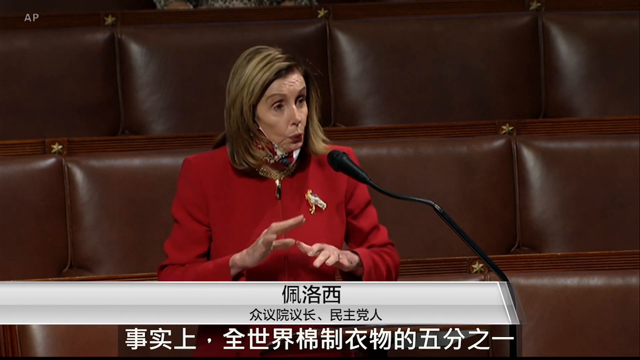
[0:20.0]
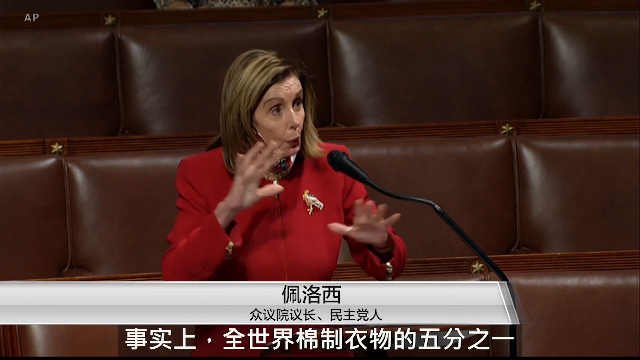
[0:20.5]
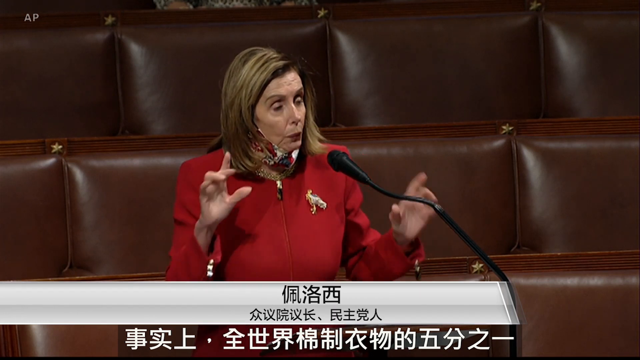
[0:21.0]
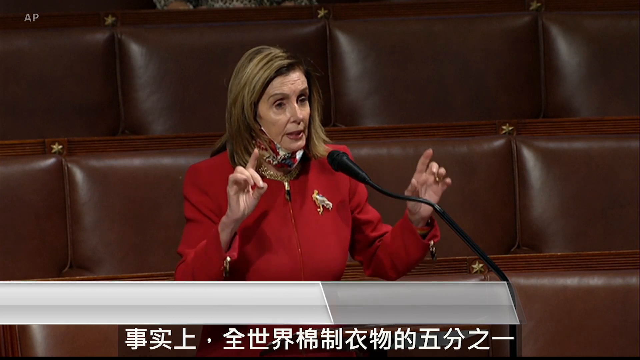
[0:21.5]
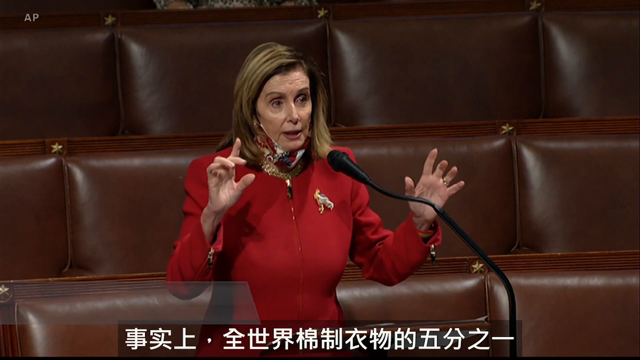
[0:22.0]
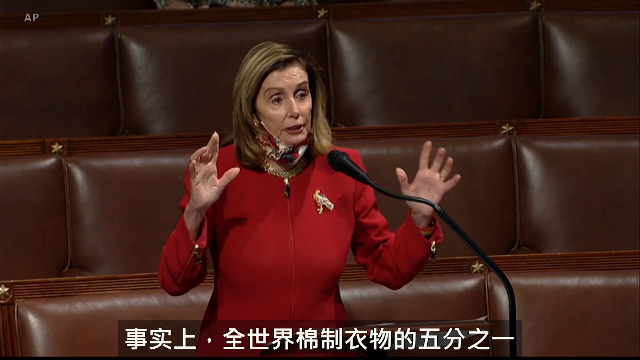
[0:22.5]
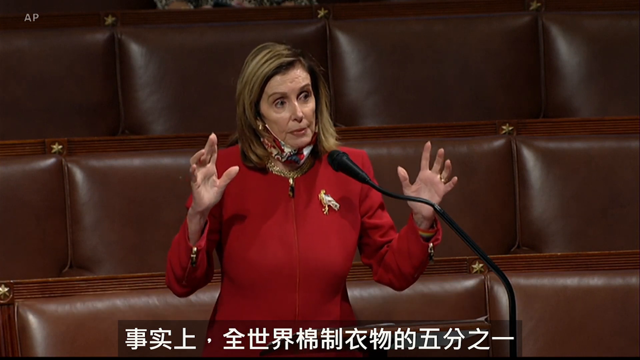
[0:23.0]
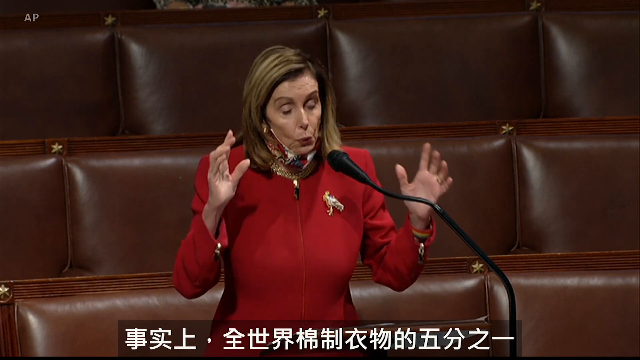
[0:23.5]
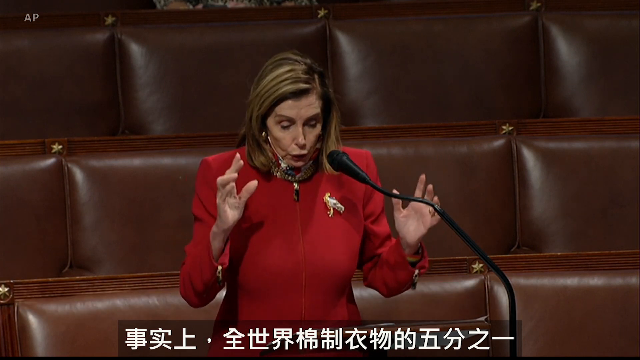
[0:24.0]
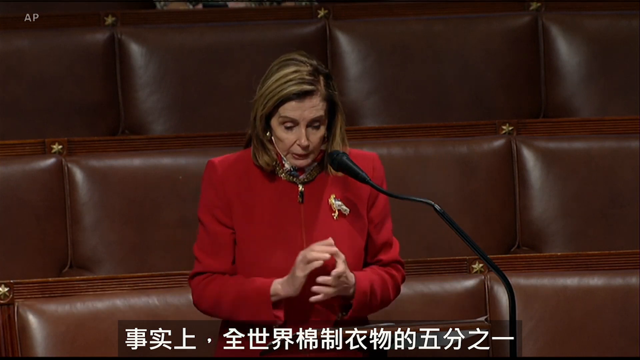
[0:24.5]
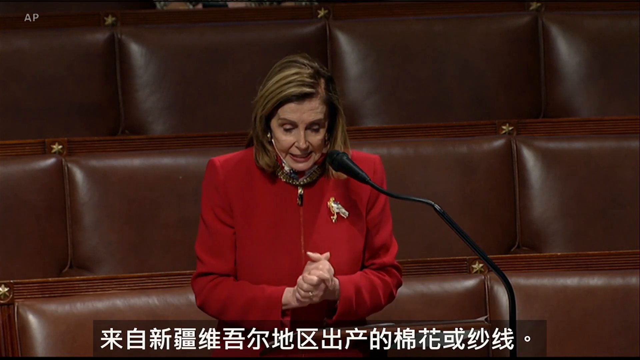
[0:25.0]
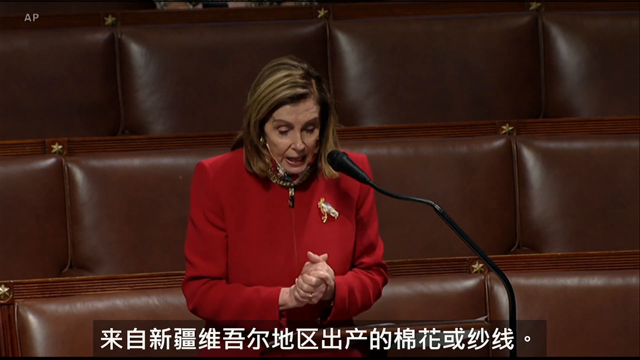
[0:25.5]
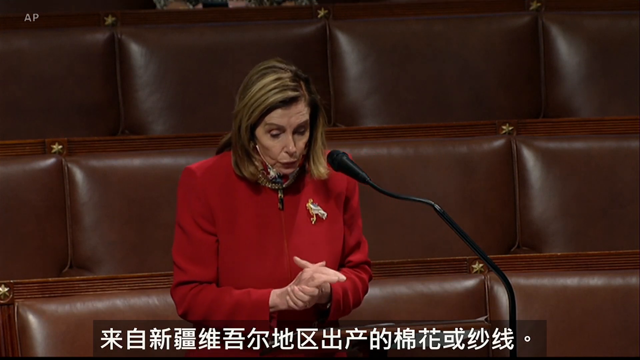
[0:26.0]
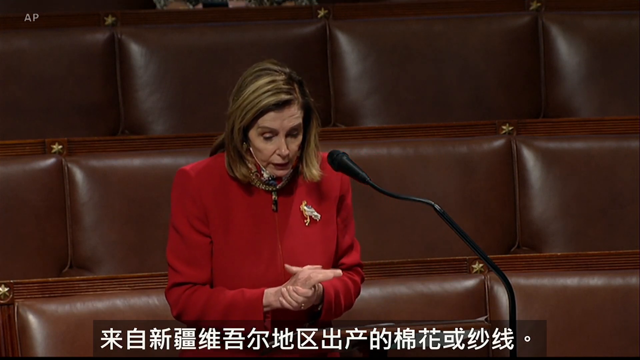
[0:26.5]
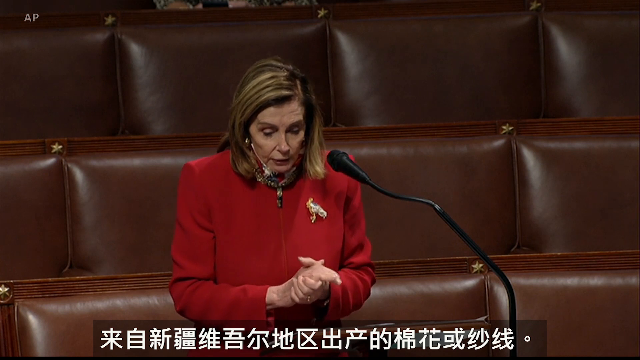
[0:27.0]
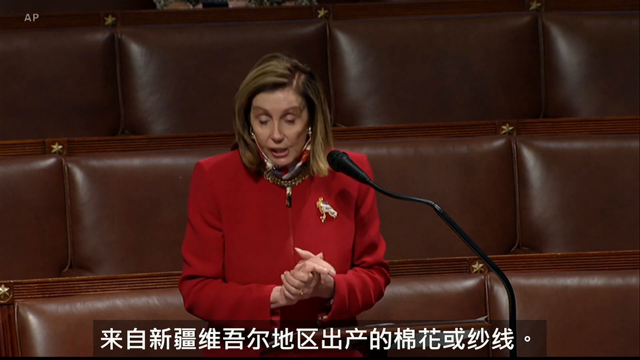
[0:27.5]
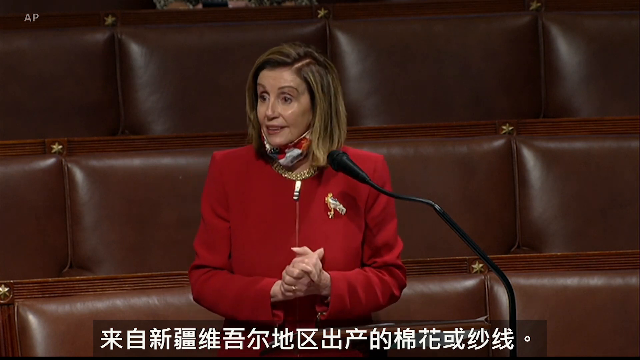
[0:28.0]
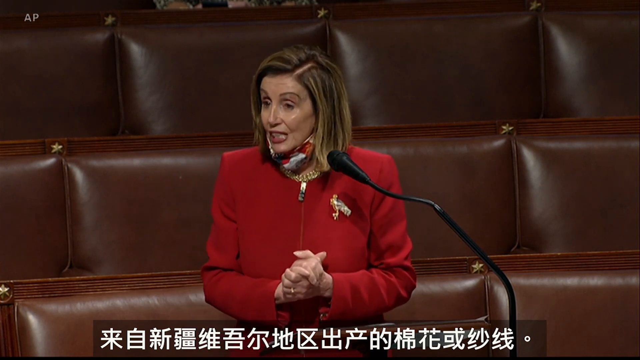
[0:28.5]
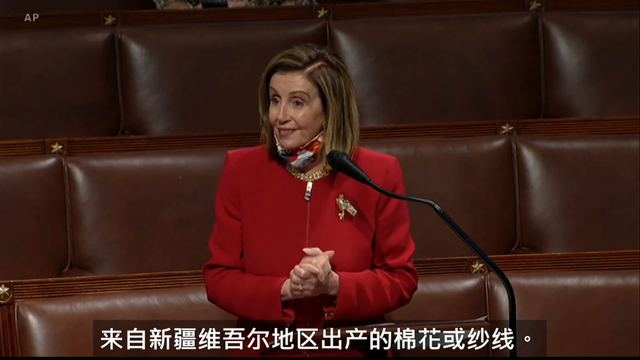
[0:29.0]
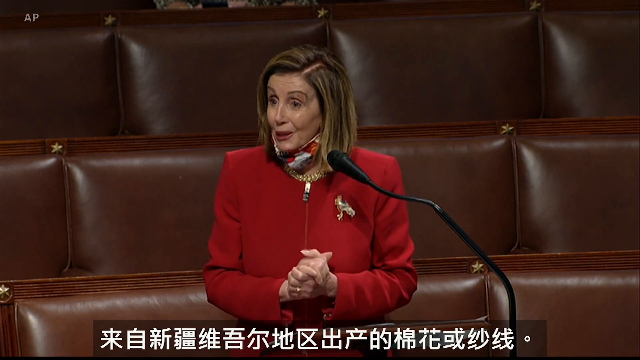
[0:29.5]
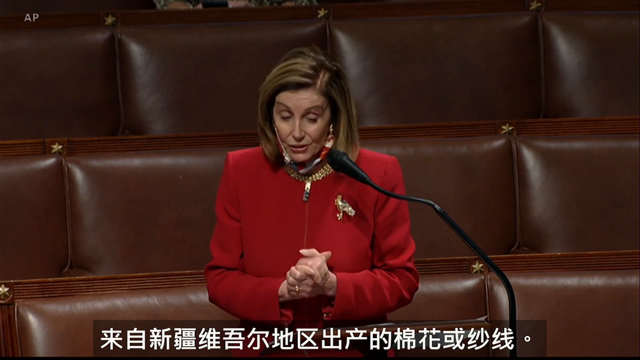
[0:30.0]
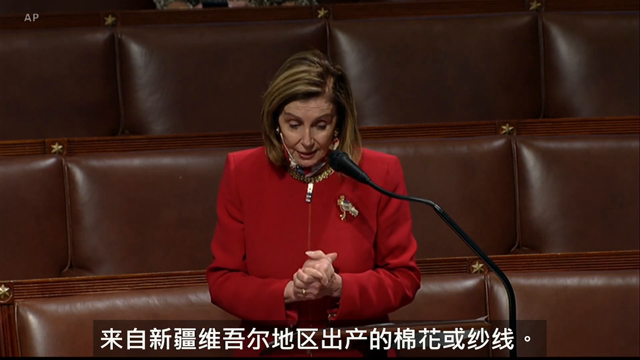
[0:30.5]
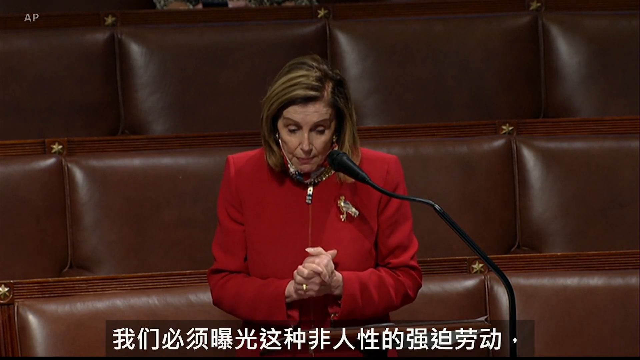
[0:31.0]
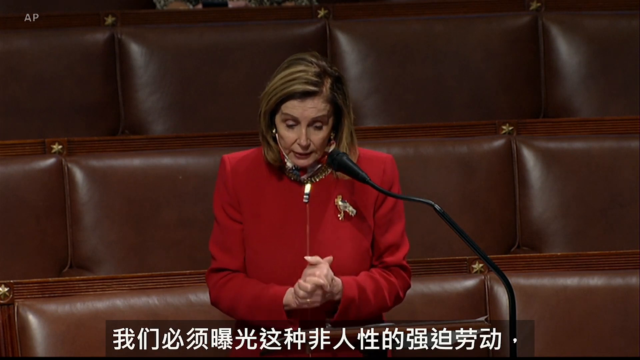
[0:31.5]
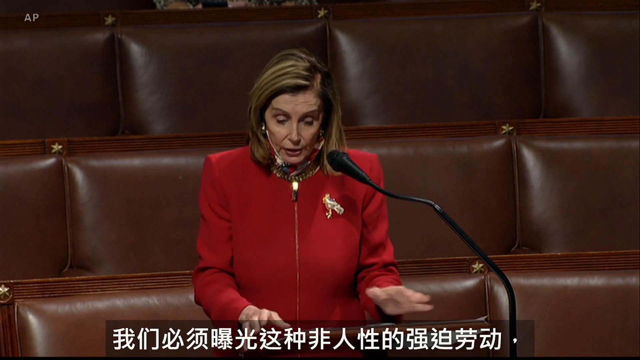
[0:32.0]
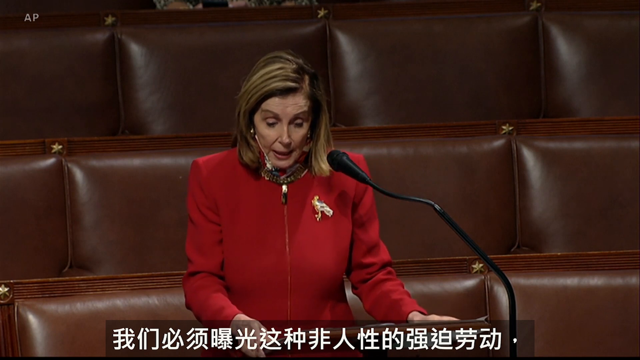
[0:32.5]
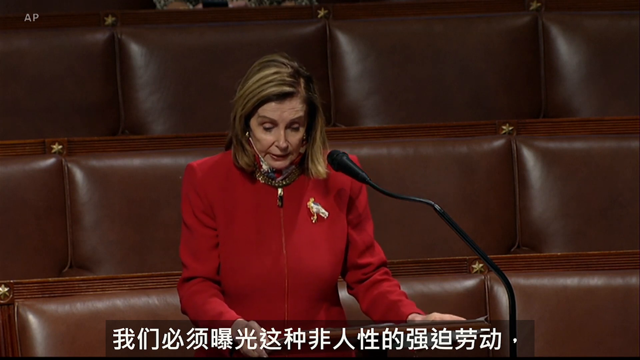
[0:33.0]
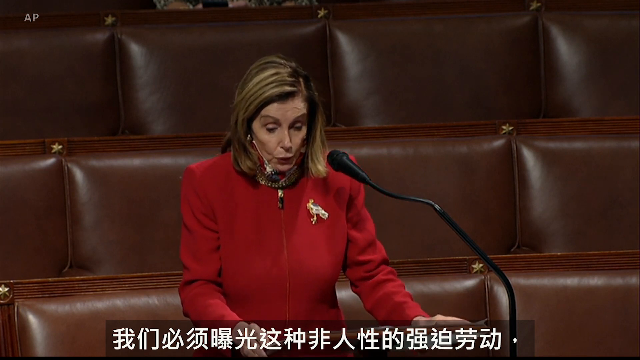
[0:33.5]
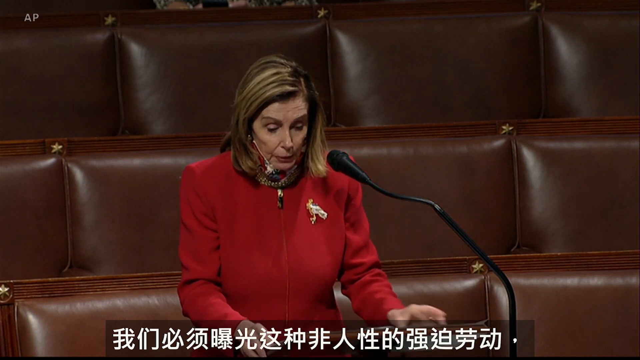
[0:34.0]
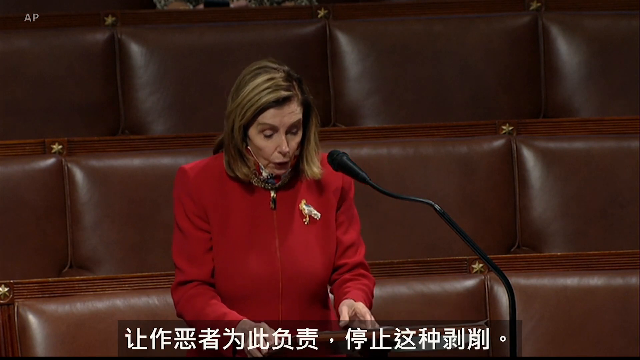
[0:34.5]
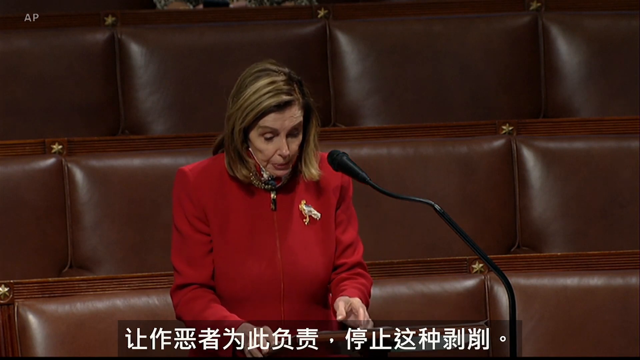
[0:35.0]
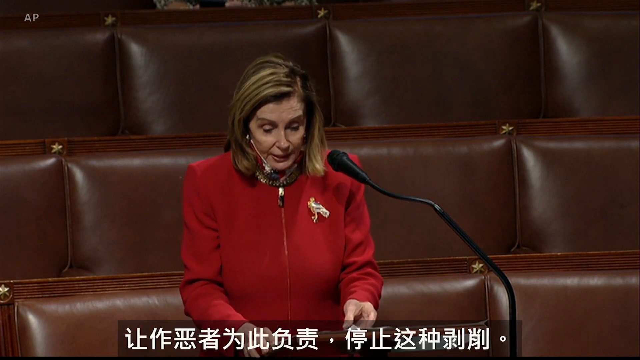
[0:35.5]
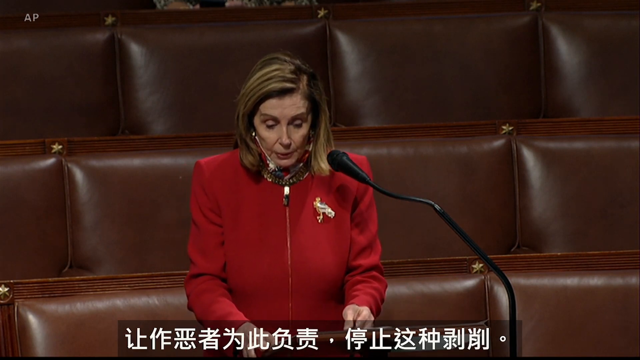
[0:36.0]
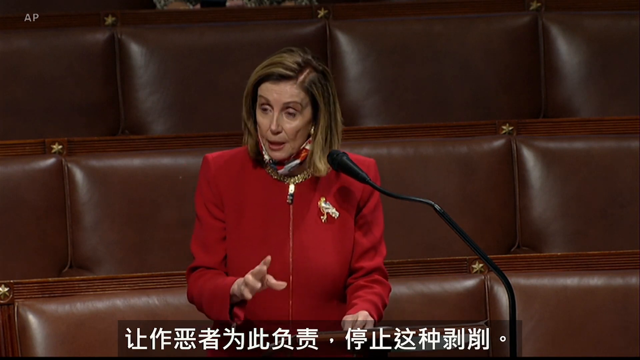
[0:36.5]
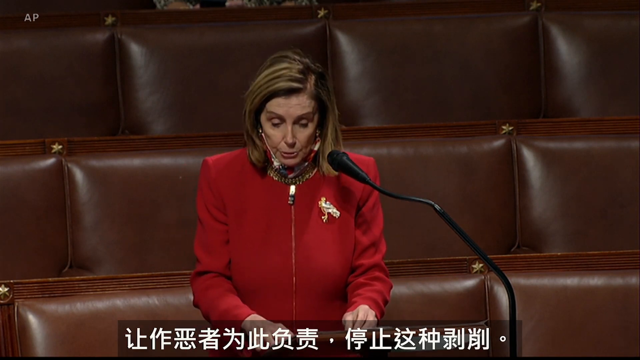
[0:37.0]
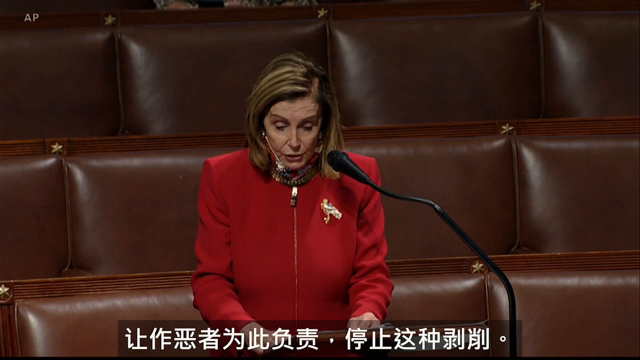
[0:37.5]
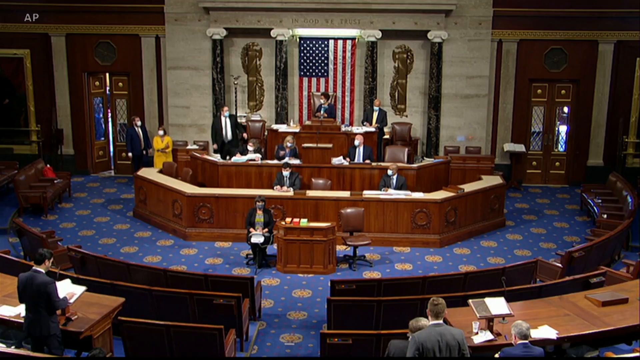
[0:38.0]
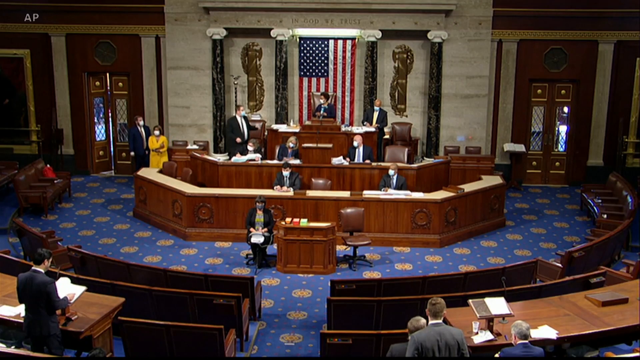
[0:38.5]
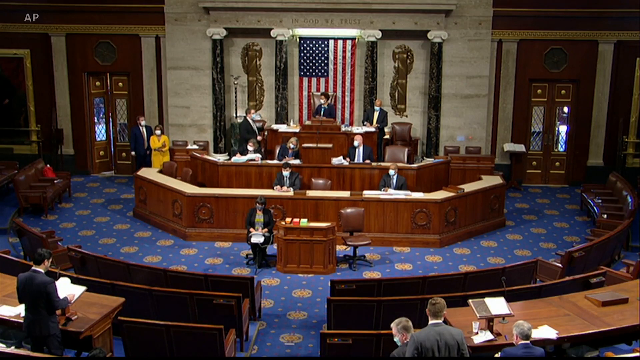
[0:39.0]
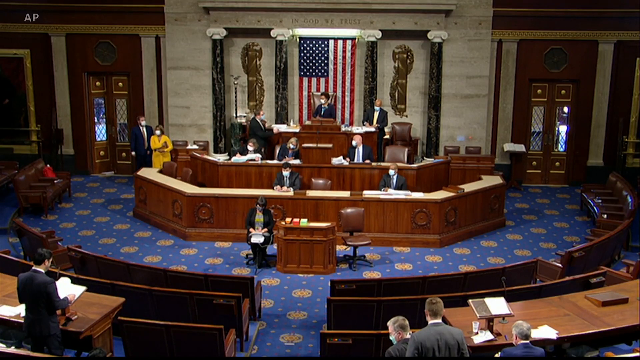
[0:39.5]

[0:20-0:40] House Speaker Nancy Pelosi continues her speech. She wears a red jacket zipped all the way up, a gold pin of what looks like some kind of bird on her left chest, and a thick gold necklace. Her medical mask is pulled down so it sits right under her chin. She speaks expressively, clasping her hand and looking around the room, and reads from some notes to highlight her main points. The camera then pans back to the front of the courtroom, where the judge is talking to a man. Other Congress people sit in rows in front of the judge; some are just waiting while others do paperwork. The court stenographer is at the front of the room, and two people are kind of waiting by the door.